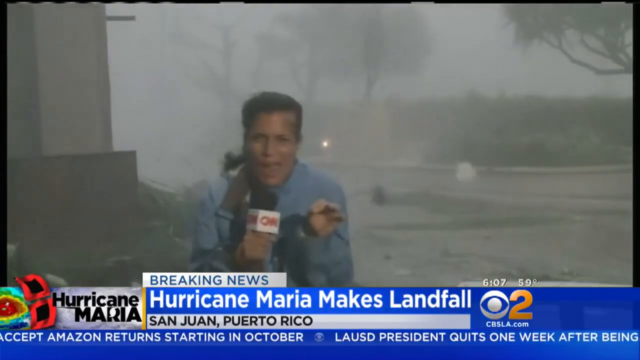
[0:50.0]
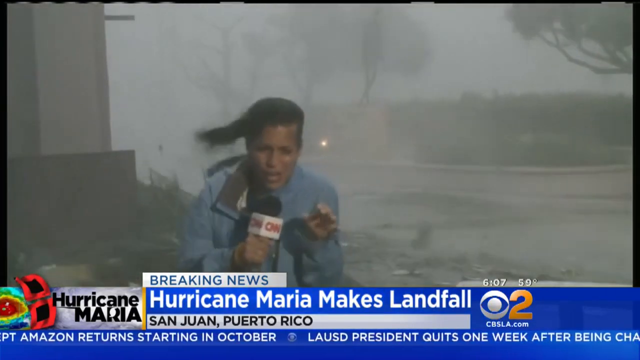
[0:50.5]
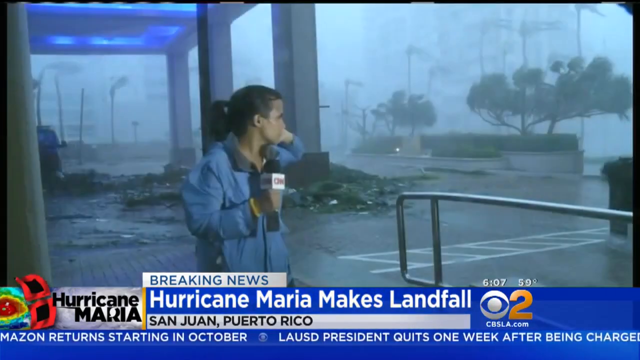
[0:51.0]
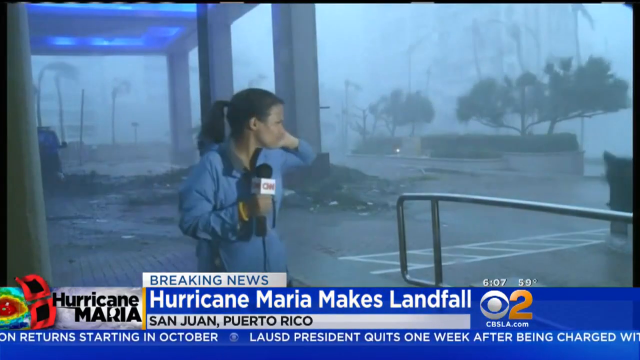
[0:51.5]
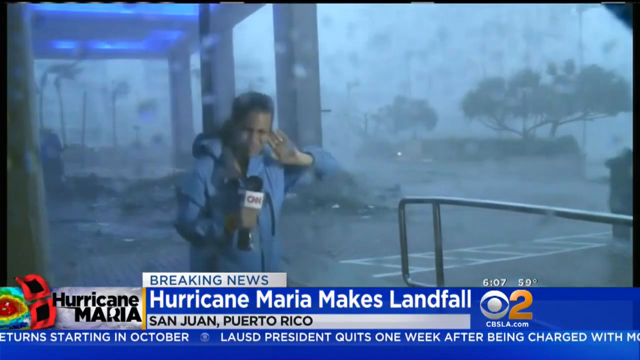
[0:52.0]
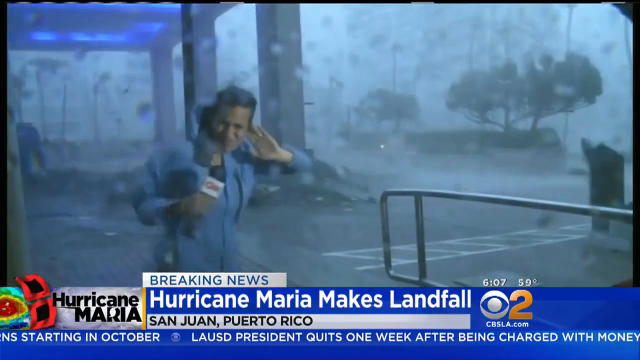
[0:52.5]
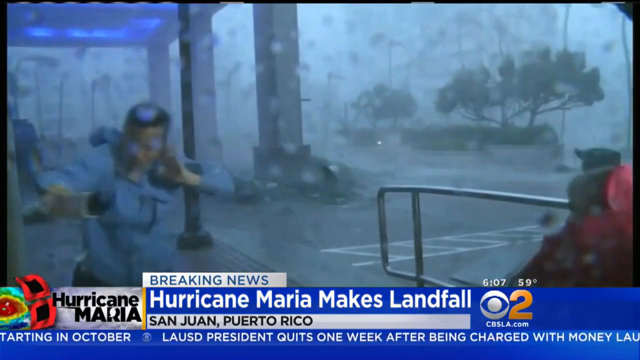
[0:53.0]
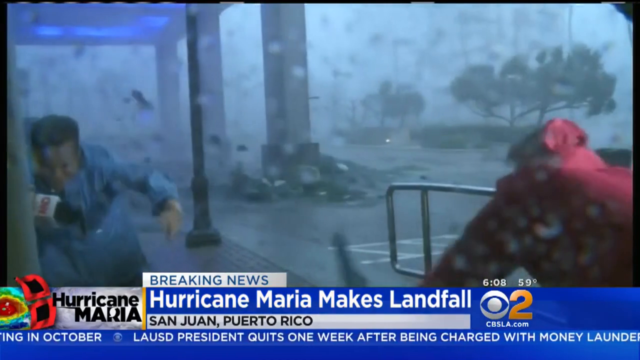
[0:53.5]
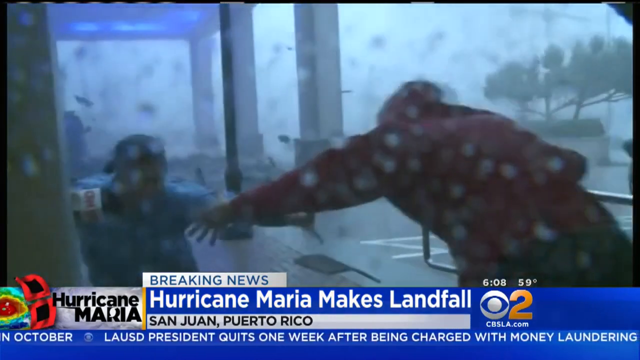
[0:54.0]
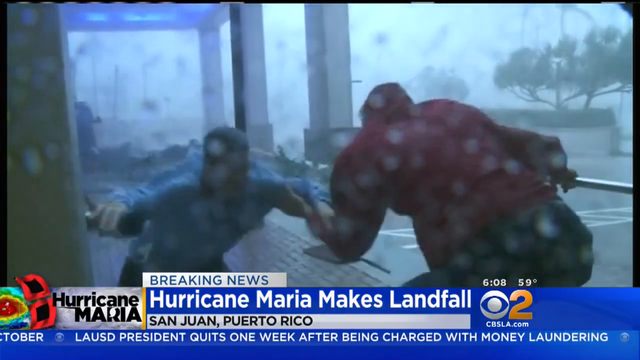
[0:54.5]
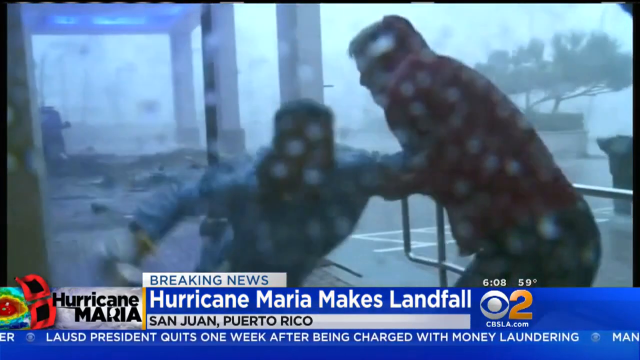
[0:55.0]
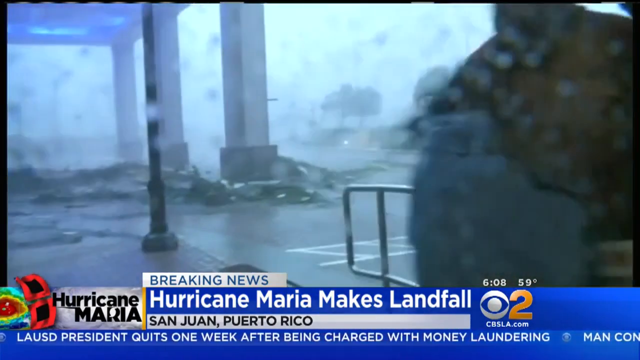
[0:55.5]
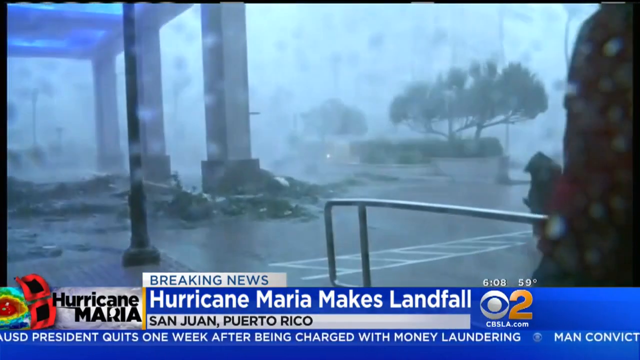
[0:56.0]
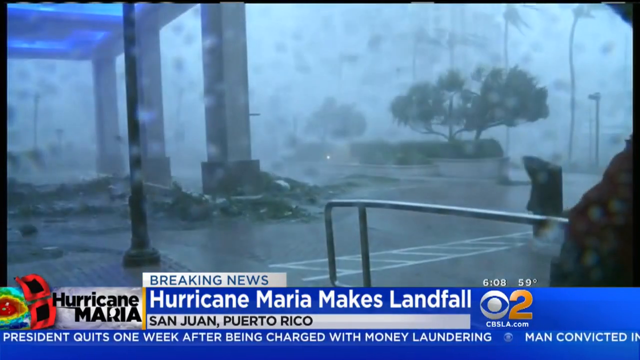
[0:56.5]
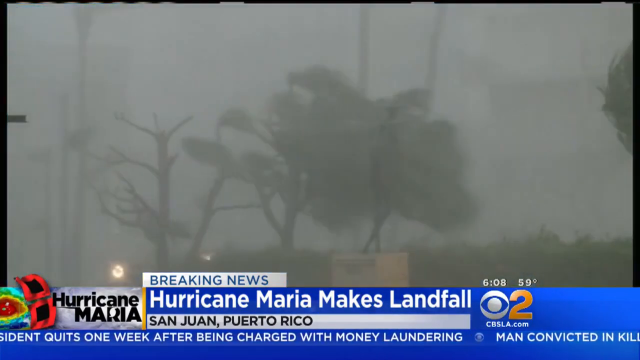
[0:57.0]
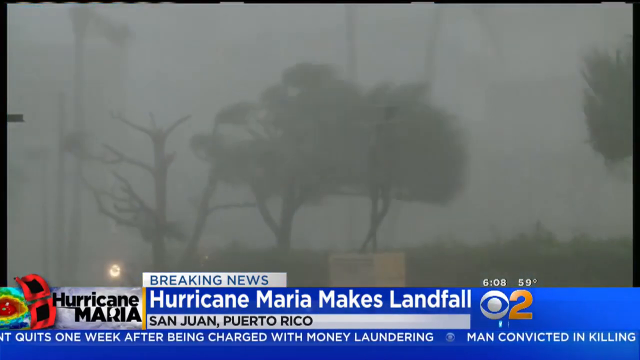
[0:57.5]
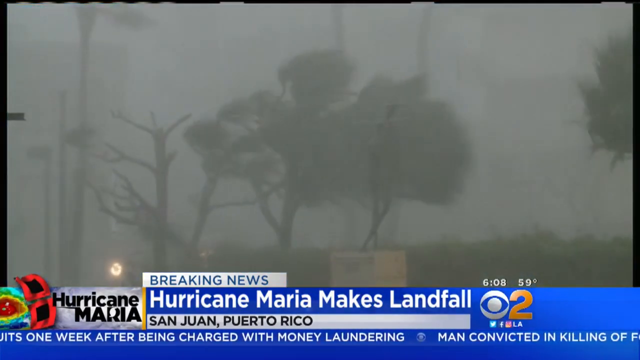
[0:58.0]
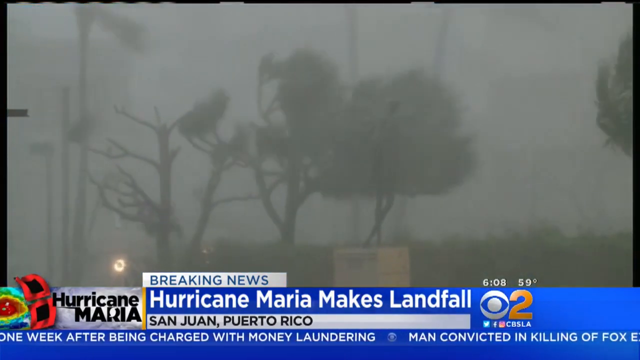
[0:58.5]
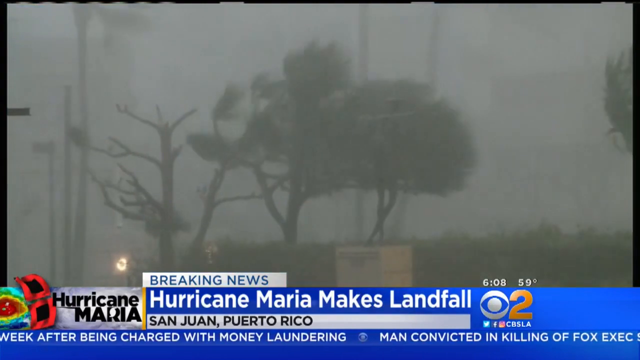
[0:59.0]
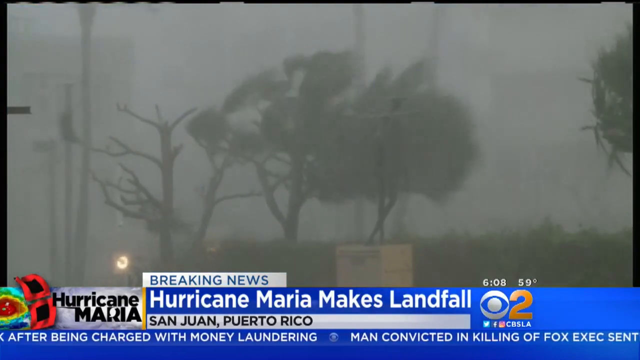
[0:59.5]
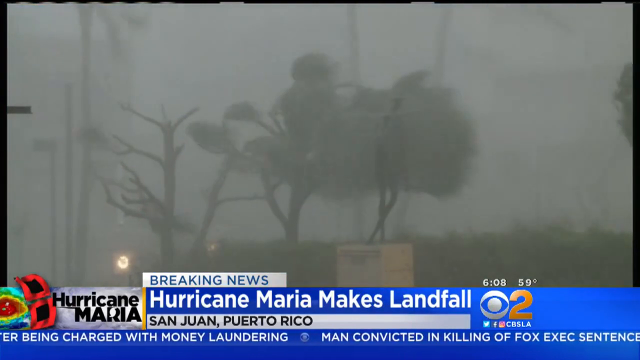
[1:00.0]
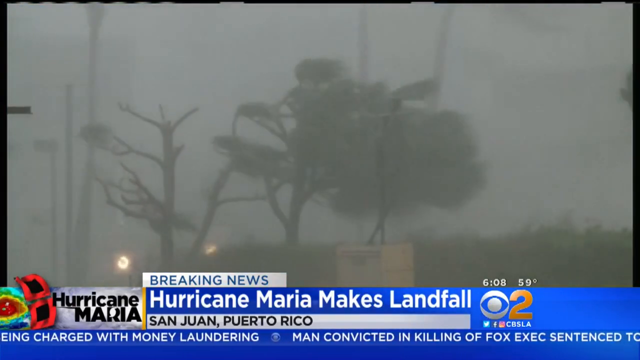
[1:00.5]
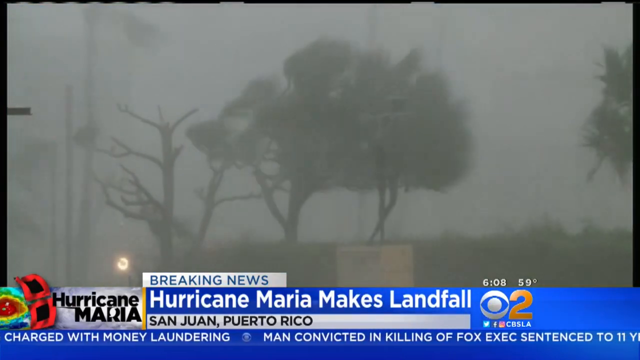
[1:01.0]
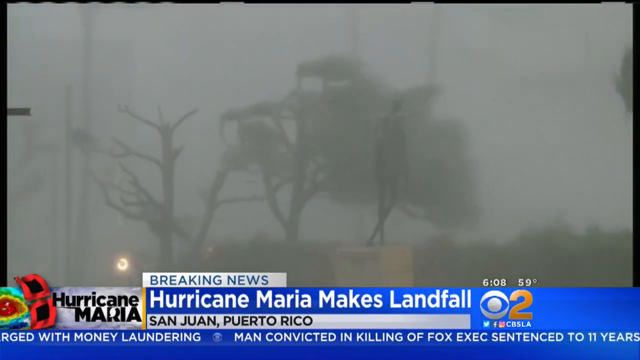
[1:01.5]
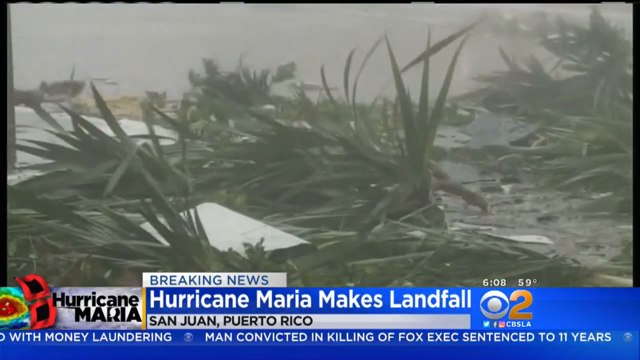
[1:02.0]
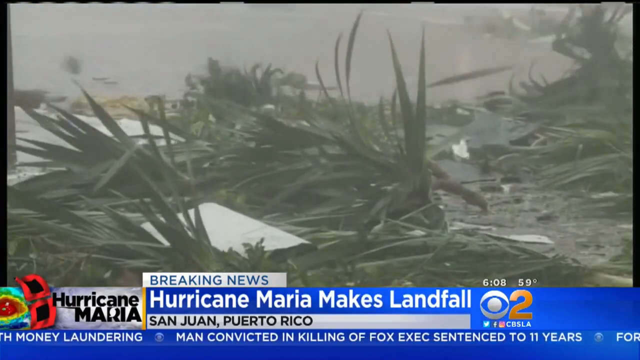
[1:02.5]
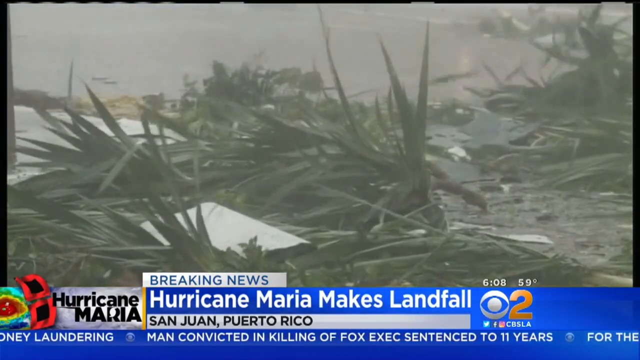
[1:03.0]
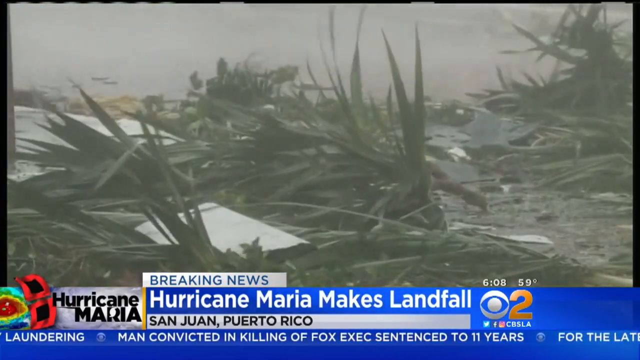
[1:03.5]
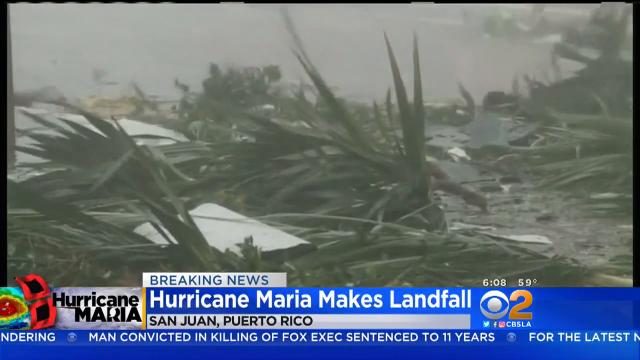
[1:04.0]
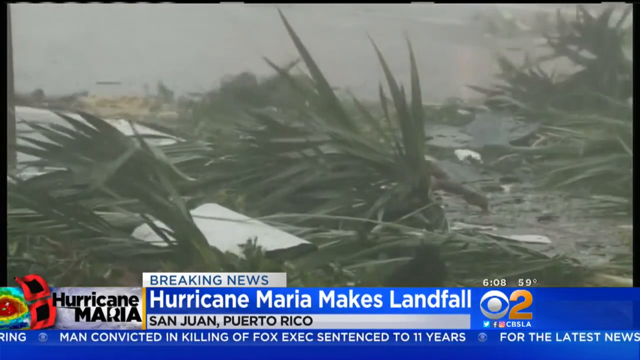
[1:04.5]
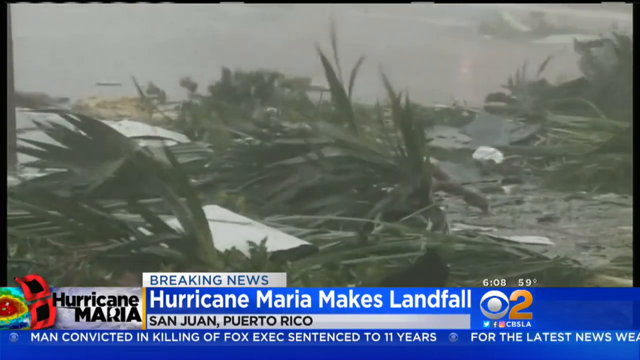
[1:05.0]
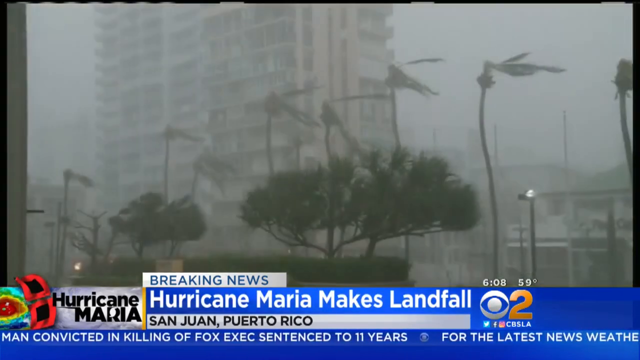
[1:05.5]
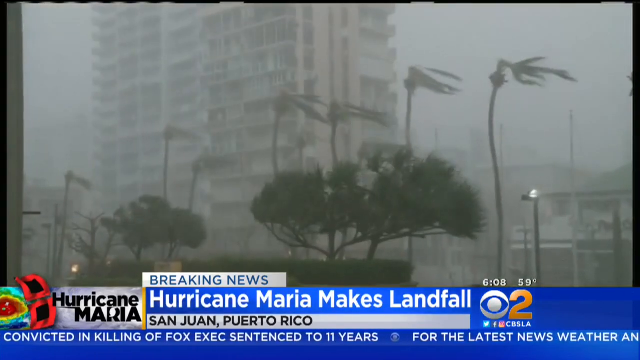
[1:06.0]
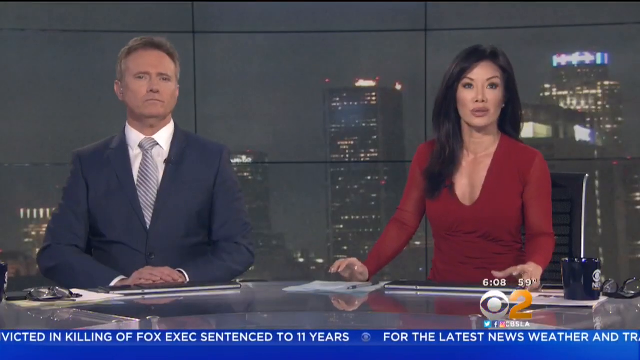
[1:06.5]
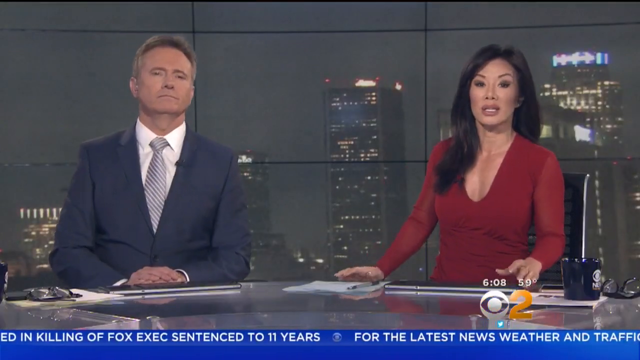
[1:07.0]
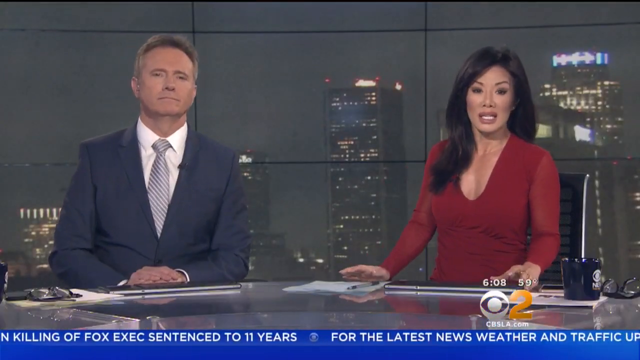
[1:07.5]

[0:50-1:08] A reporter struggles in the very strong wind and heavy rain and seems to be blown away. The scene then changes to a man and a woman in a newsroom who are delivering the news about Hurricane Maria making landfall in San Juan, Puerto Rico.